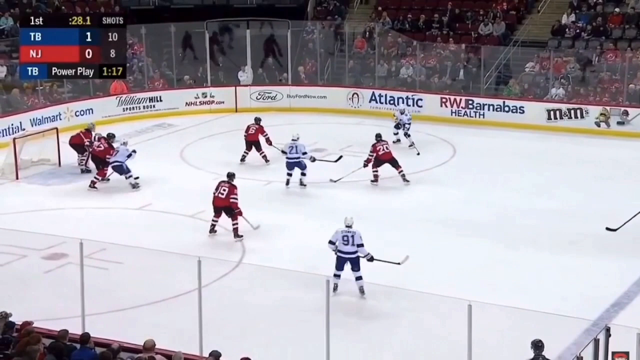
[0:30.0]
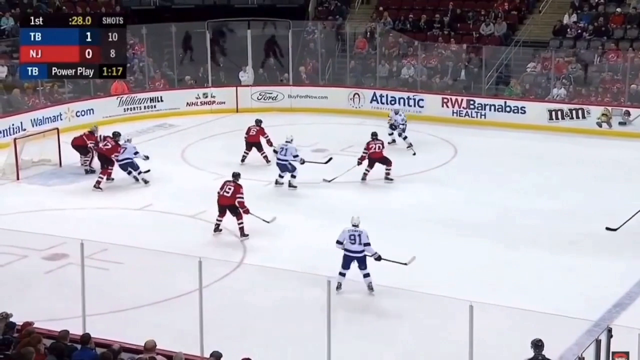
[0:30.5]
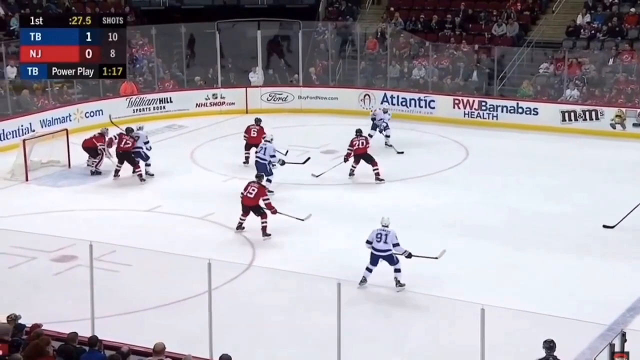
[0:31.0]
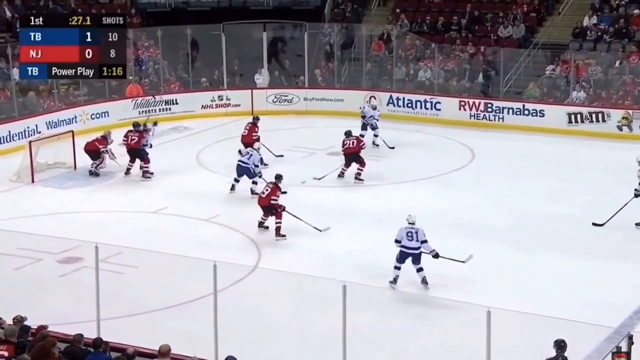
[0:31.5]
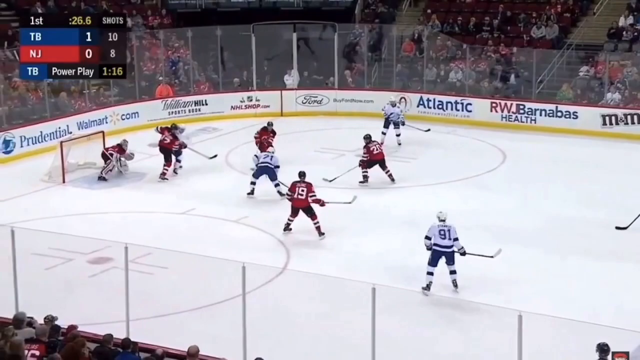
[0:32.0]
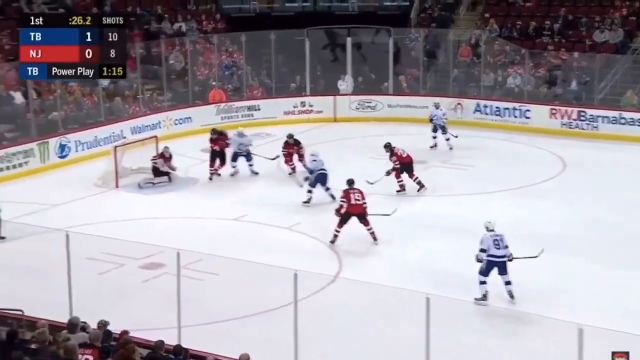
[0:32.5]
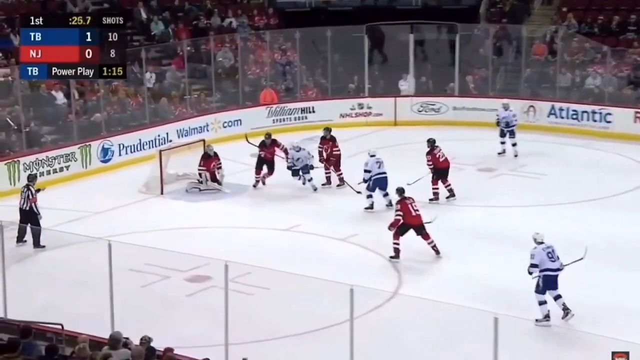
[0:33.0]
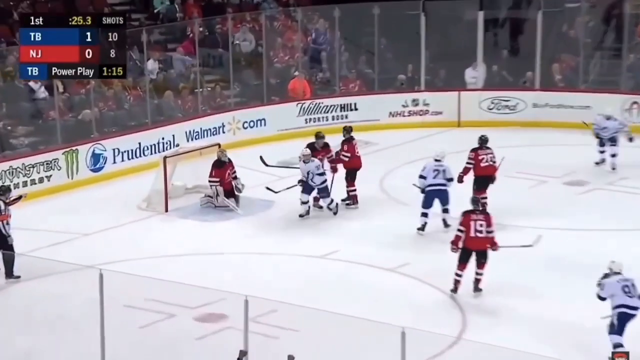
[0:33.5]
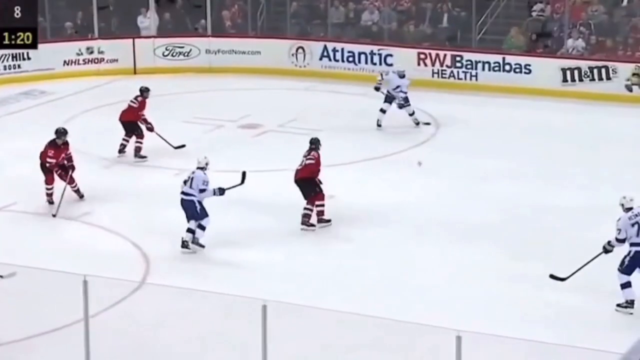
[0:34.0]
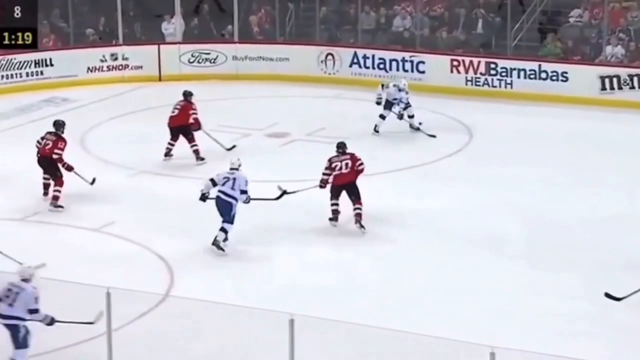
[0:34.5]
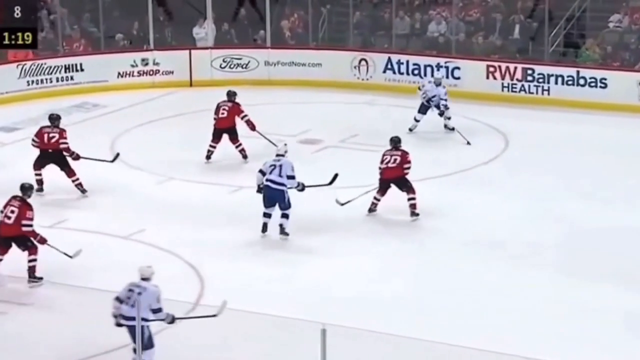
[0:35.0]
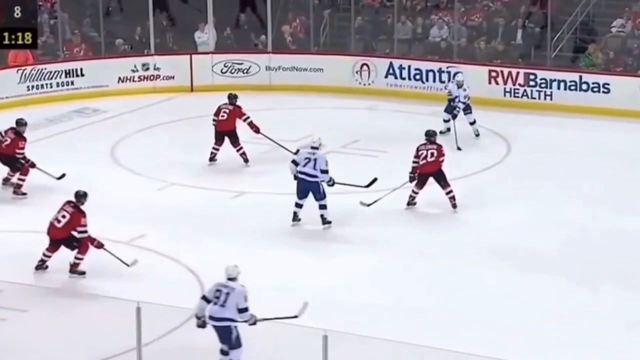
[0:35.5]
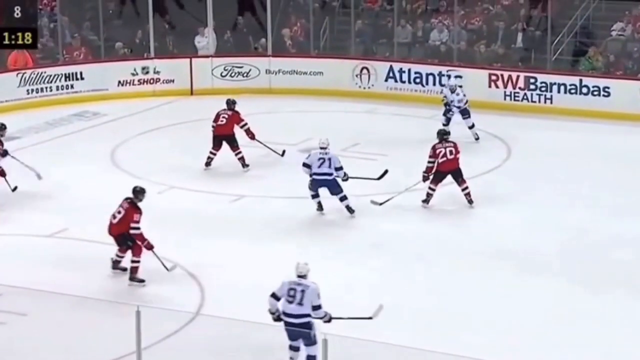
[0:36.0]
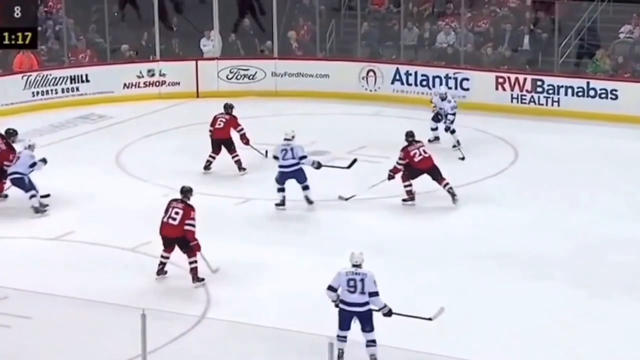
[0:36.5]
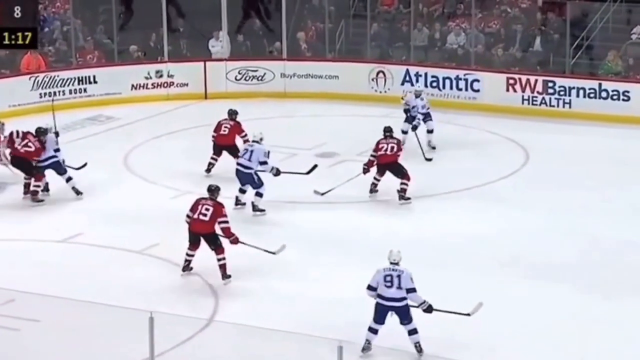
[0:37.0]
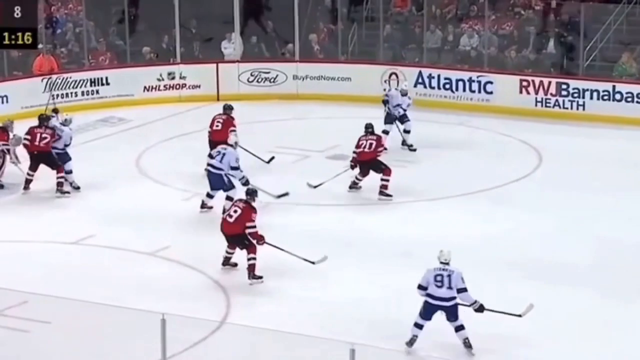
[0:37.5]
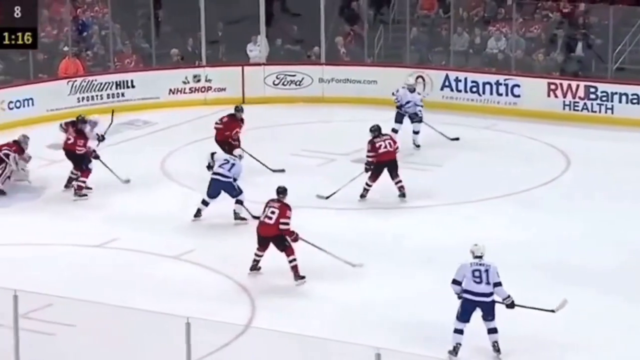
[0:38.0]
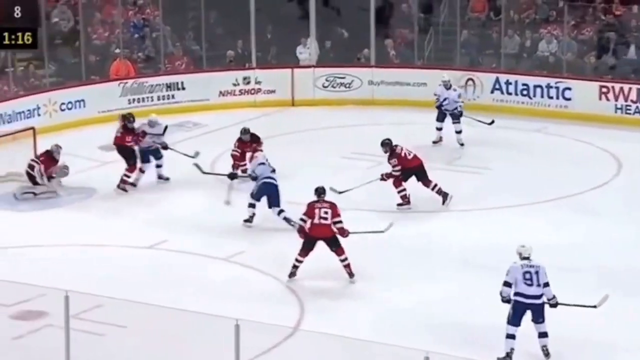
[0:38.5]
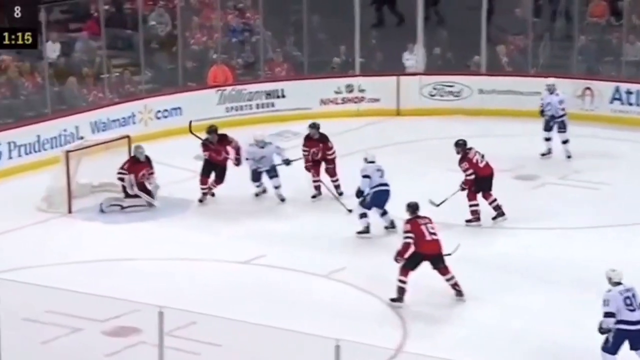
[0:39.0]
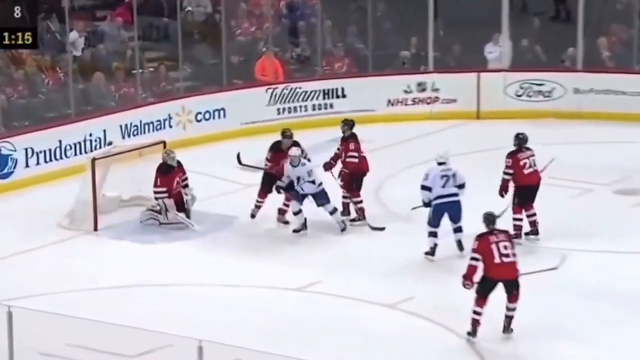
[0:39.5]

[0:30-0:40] The NHL game between visiting Tampa Bay and home team New Jersey continues in the first period with 27.7 seconds left. Tampa Bay leads 1-0, with 10 shots on goal to New Jersey's eight, and is on a power play with 1 minute and 17 seconds remaining. A pass goes to number 21, who scores a goal.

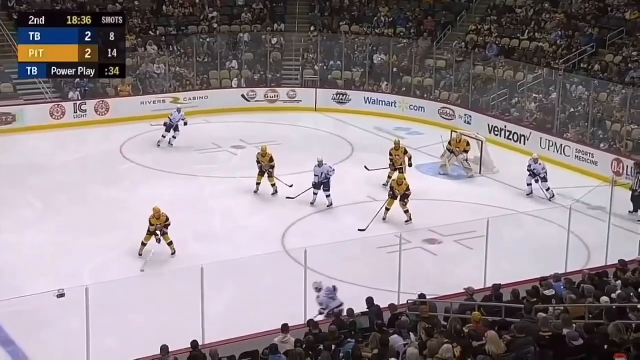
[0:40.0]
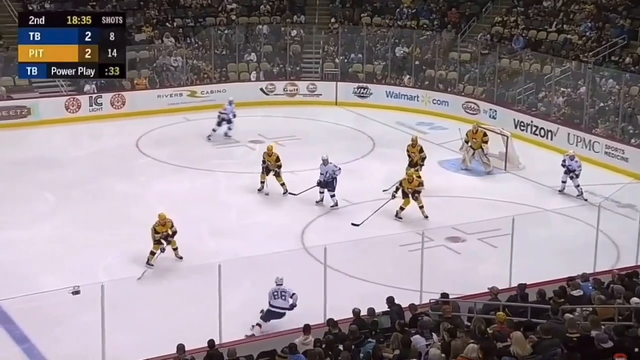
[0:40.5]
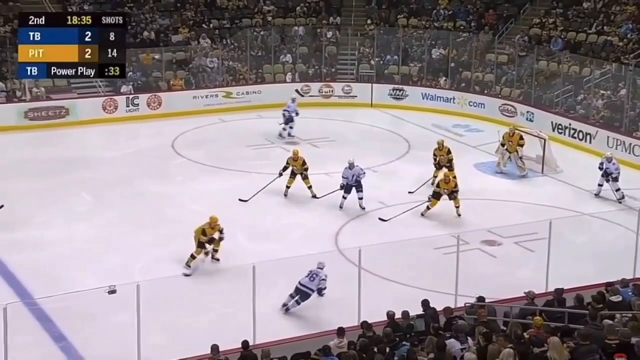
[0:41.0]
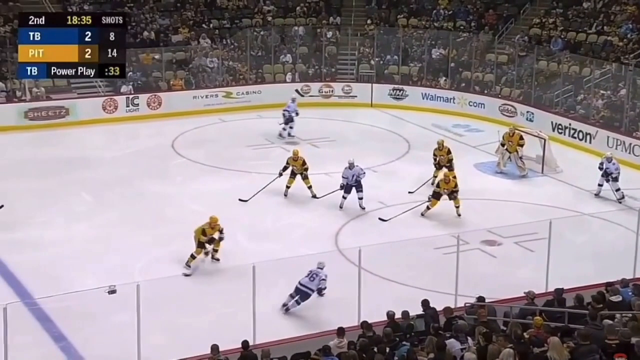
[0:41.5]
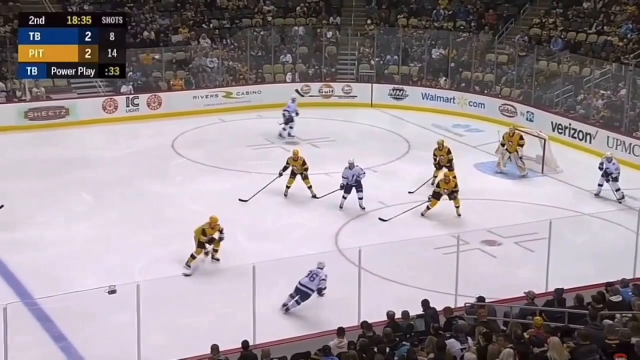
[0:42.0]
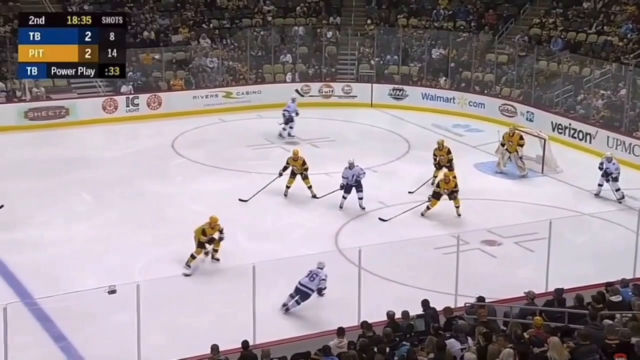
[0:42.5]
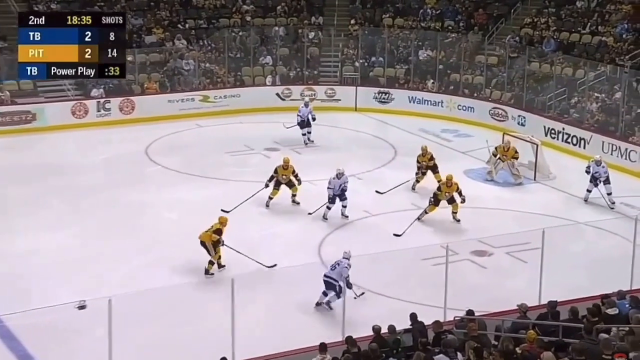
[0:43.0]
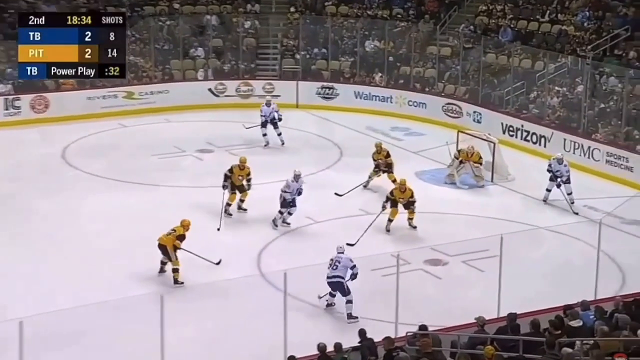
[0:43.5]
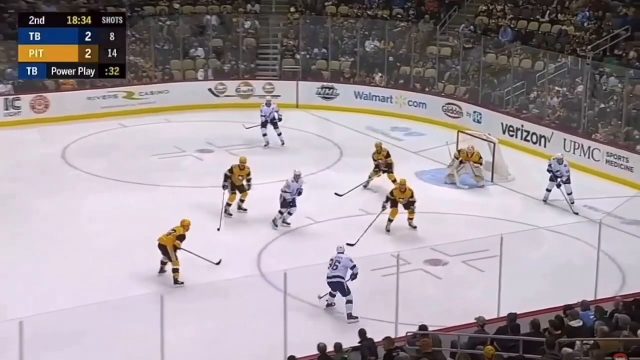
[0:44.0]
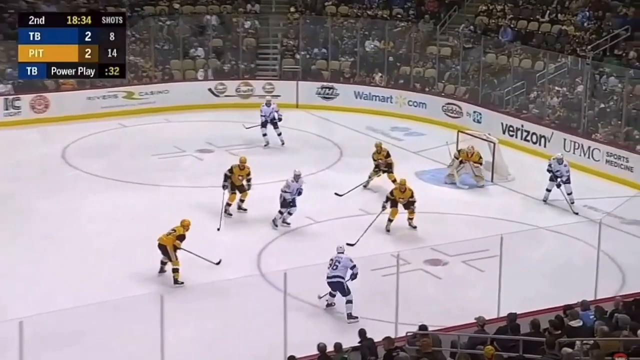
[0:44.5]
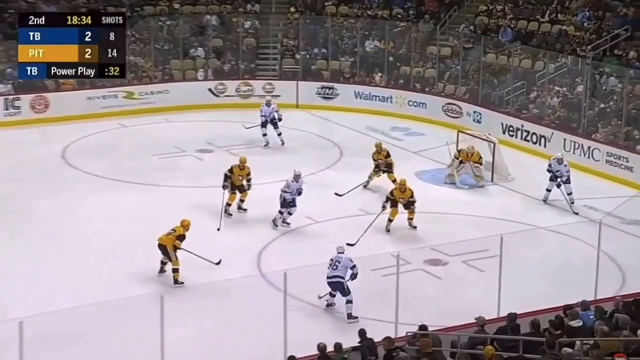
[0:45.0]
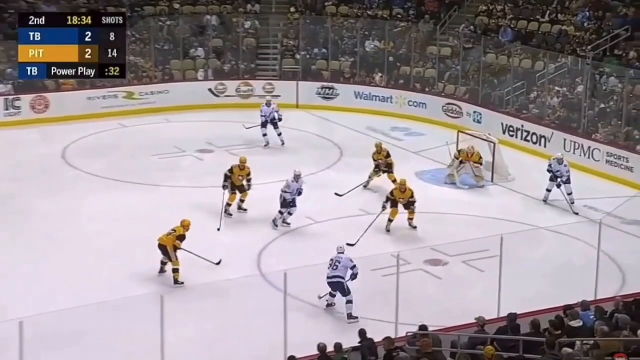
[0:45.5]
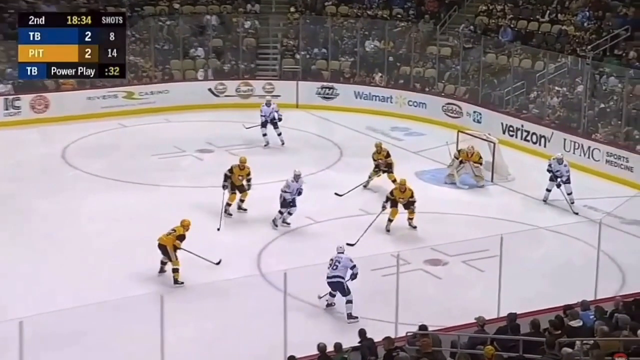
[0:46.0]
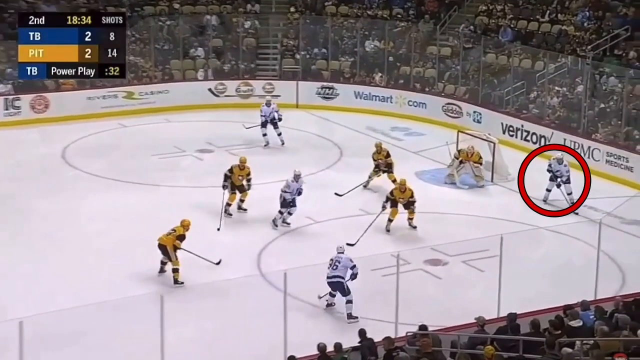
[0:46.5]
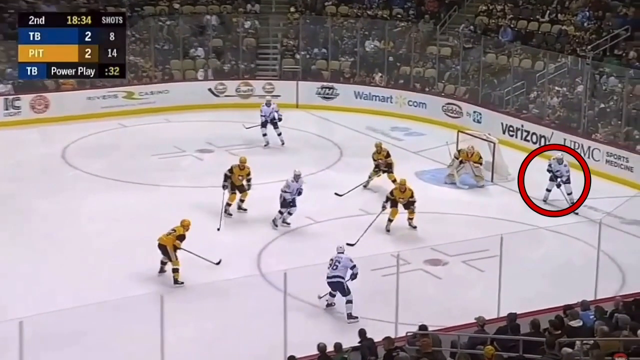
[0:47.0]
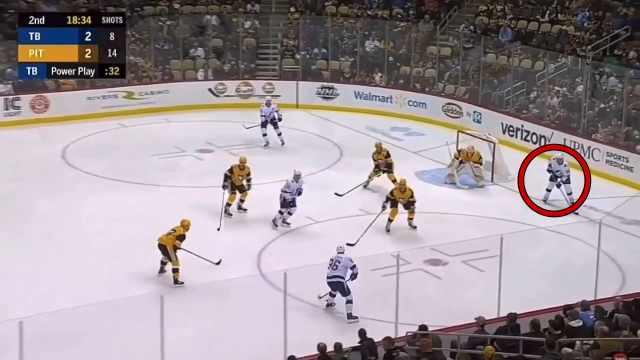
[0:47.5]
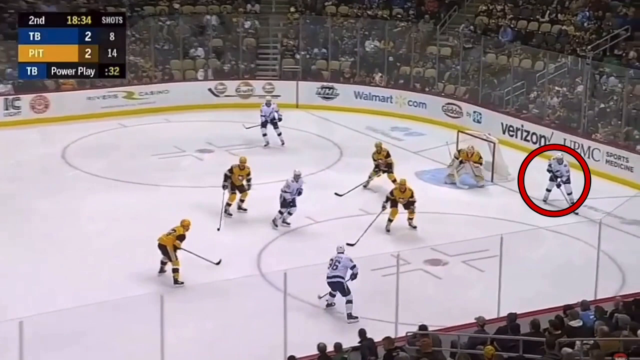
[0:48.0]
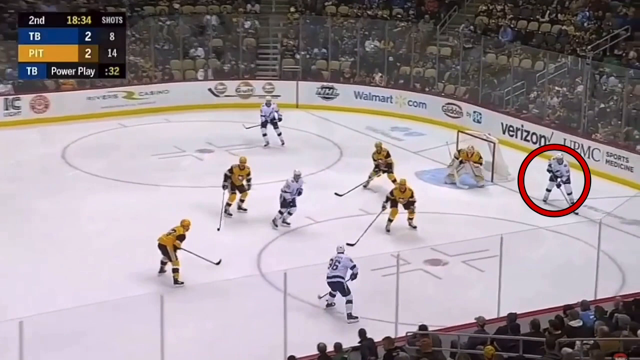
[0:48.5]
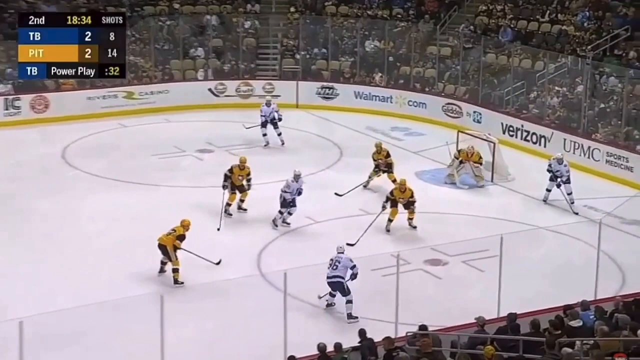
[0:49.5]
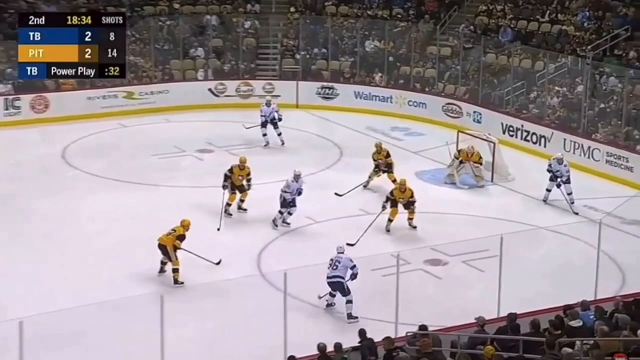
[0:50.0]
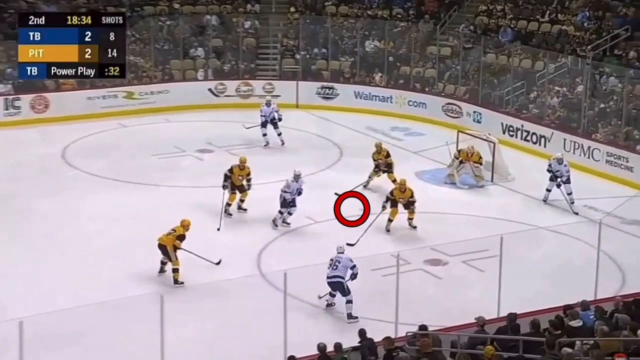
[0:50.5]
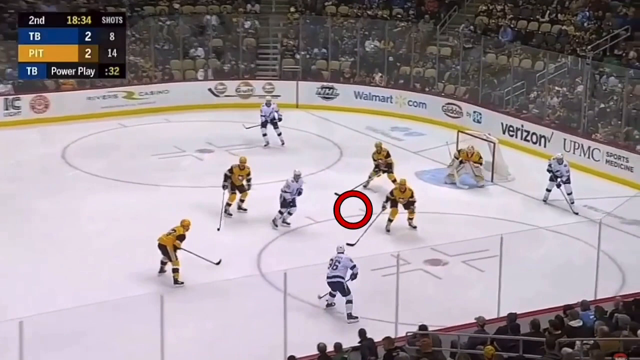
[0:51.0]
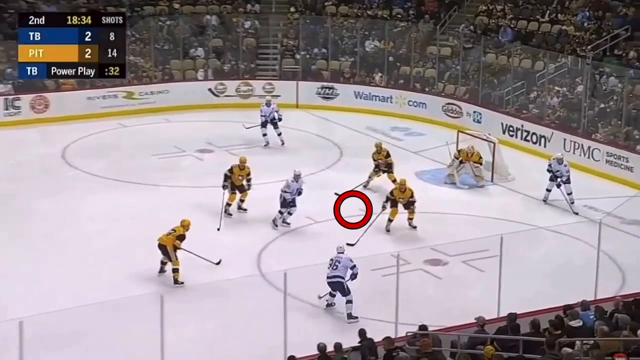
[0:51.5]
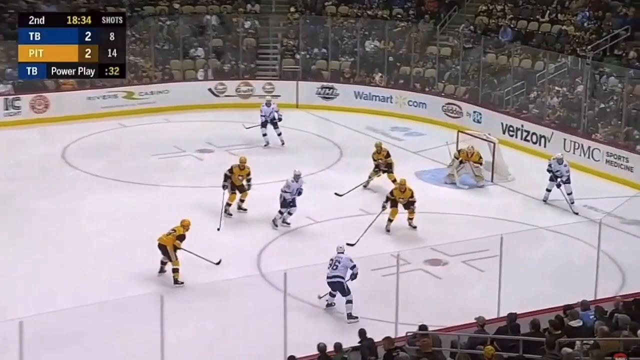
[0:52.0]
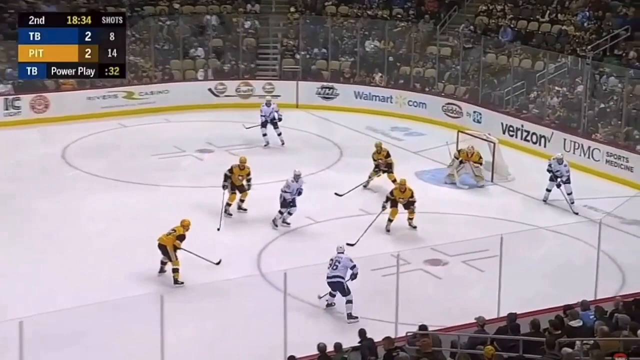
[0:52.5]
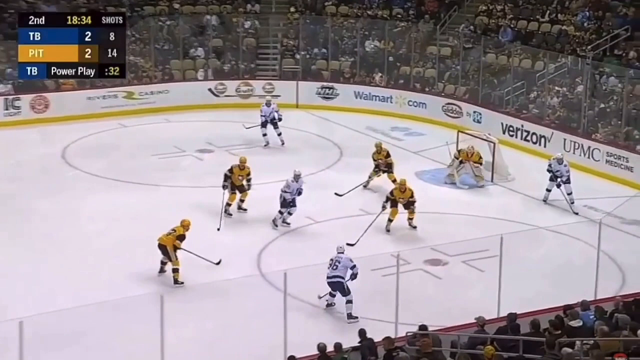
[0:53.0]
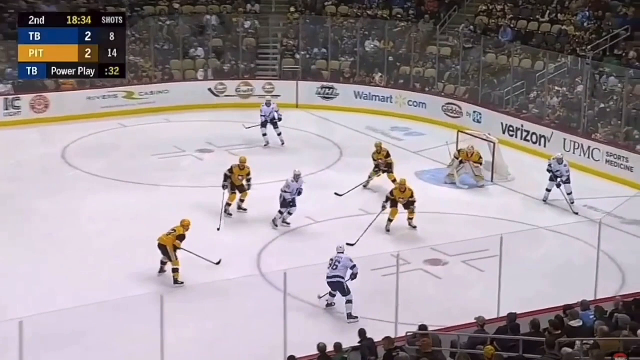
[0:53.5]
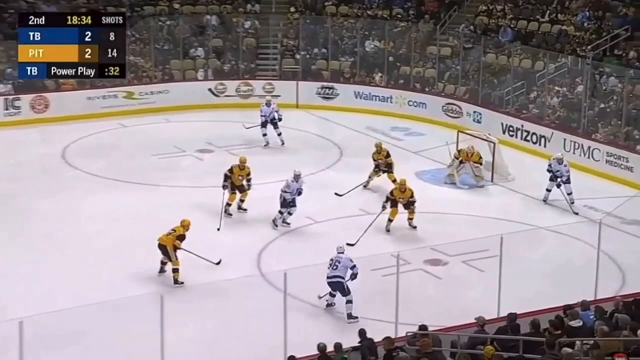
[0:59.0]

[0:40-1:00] A different NHL game is shown, between visiting Tampa Bay and home team Pittsburgh. It is the second period with 18 minutes and 36 seconds left, and the game is tied 2-2. Tampa Bay has eight shots on goal and Pittsburgh has 14. Tampa Bay is on a power play with 34 seconds left in it. Advertisements along the wall include golf, walmart.com, Glidden, Verizon and UPMC Sports Medicine. Tampa Bay wears white and blue, with a blue stripe around the bottom of the white jersey. Pittsburgh wears yellow helmets, yellow and black tops, and black bottoms with white and yellow stripes on the side.